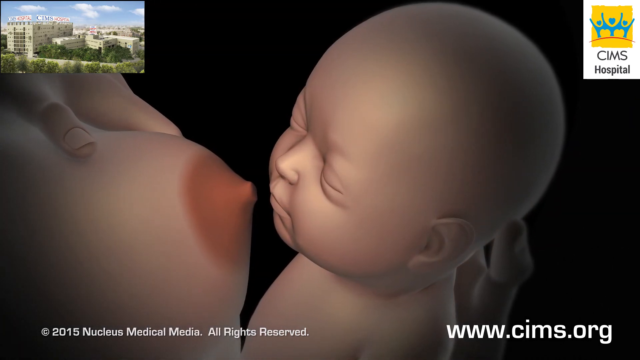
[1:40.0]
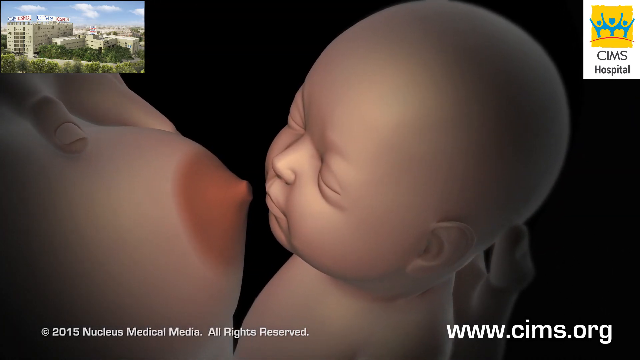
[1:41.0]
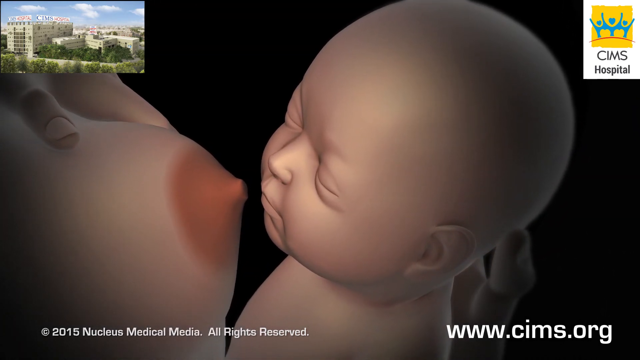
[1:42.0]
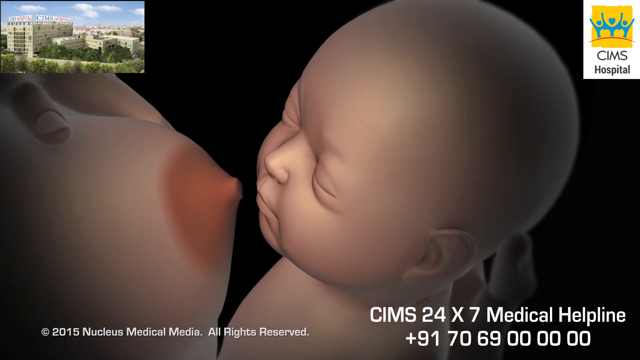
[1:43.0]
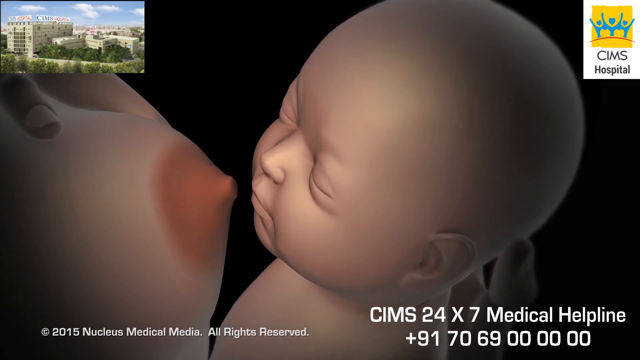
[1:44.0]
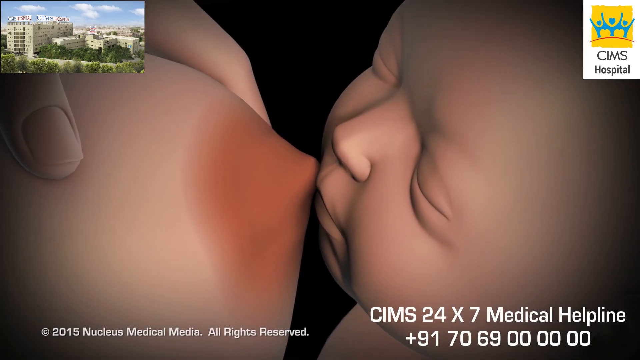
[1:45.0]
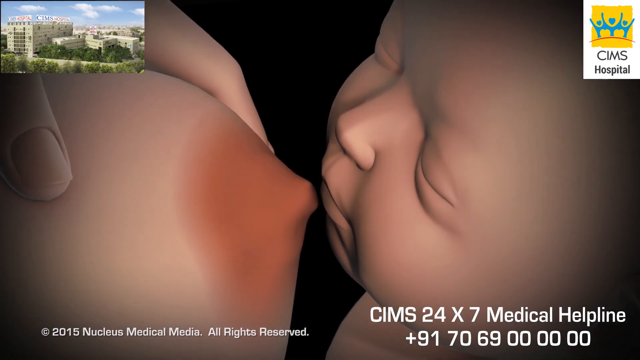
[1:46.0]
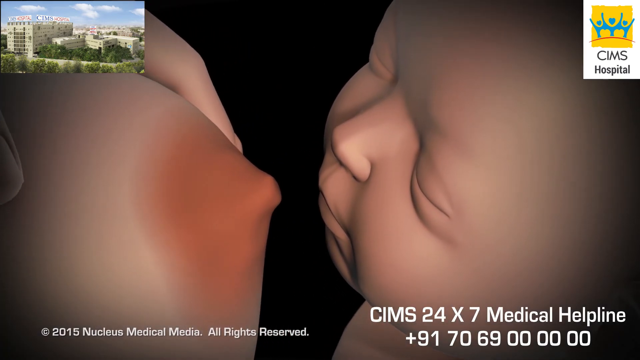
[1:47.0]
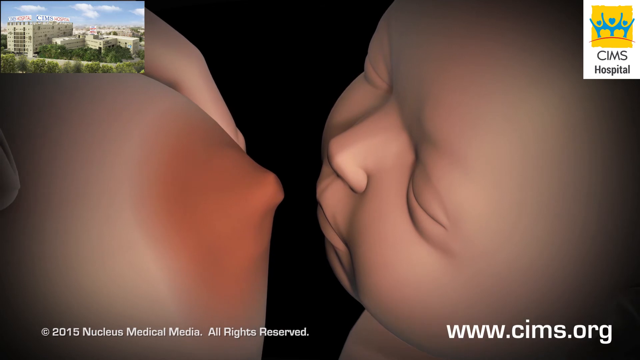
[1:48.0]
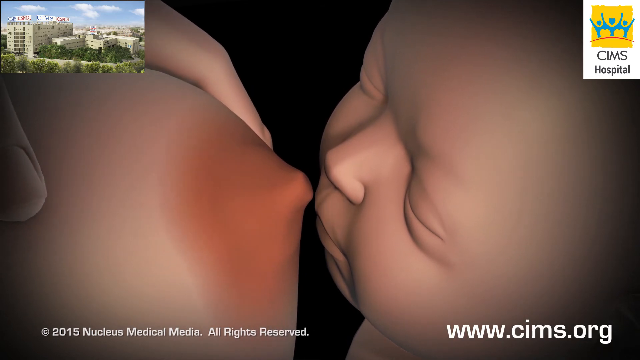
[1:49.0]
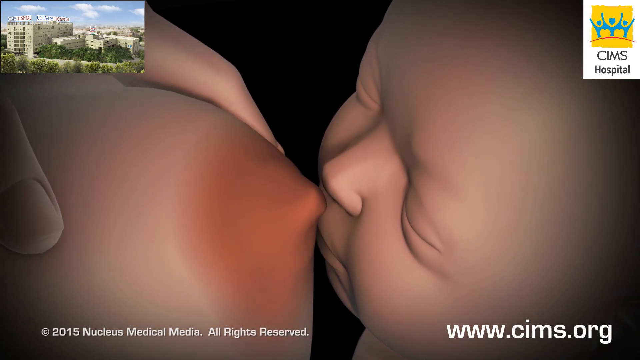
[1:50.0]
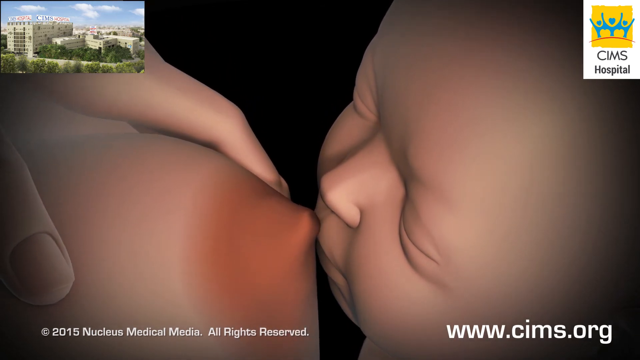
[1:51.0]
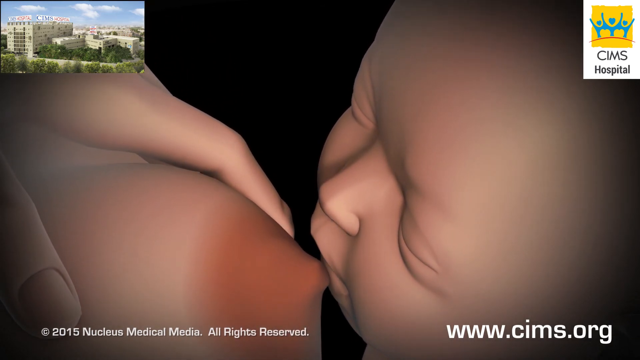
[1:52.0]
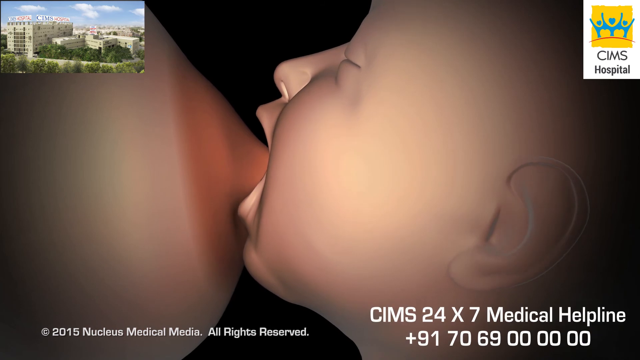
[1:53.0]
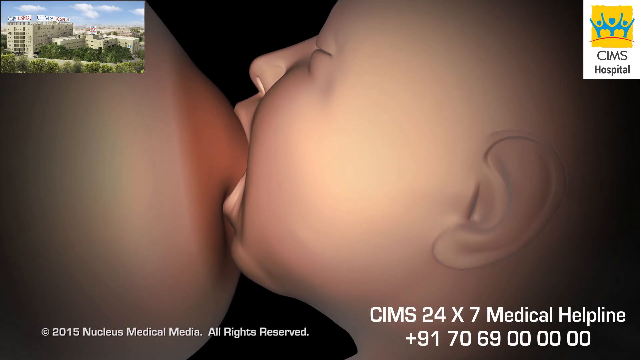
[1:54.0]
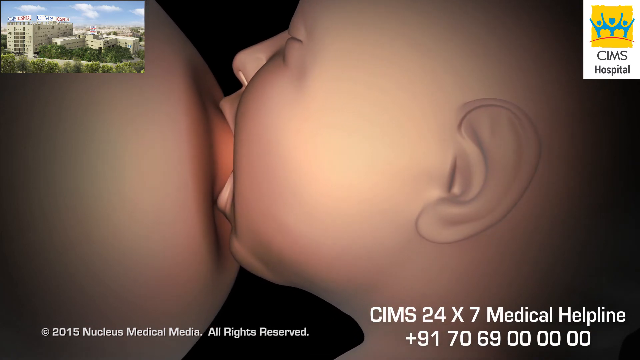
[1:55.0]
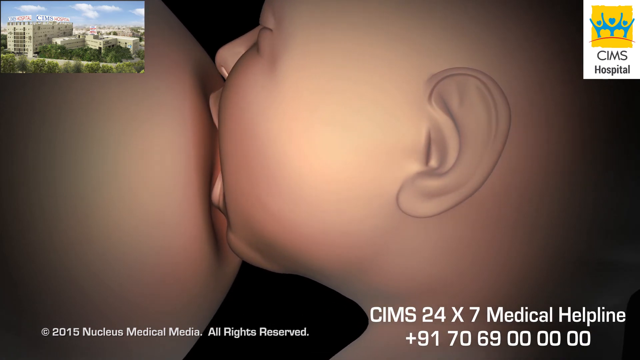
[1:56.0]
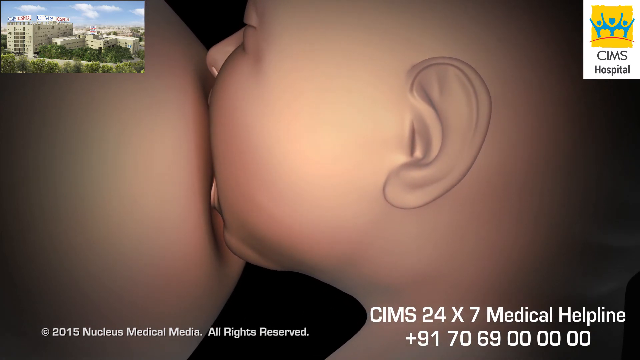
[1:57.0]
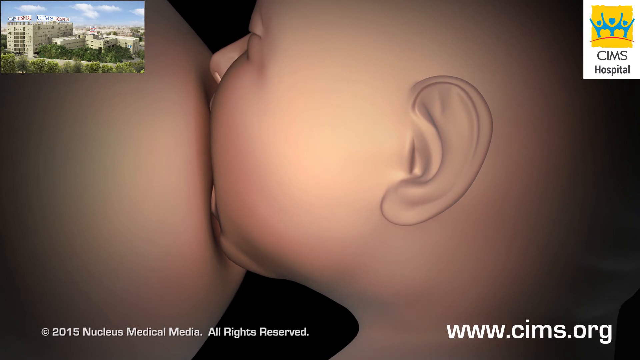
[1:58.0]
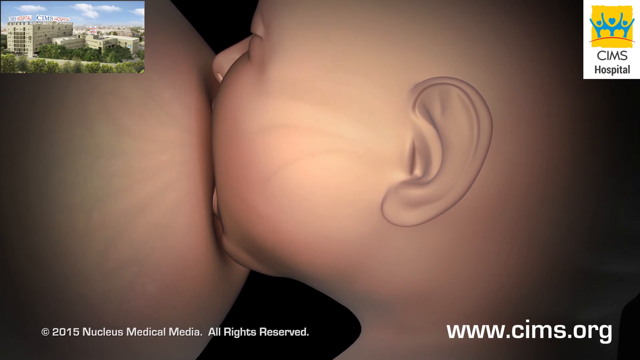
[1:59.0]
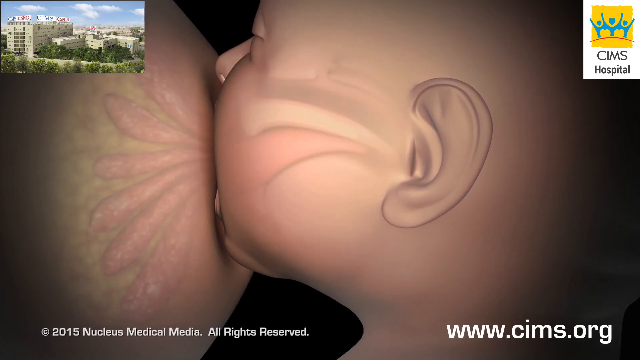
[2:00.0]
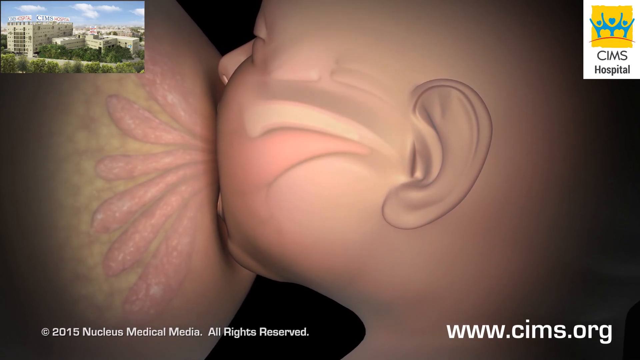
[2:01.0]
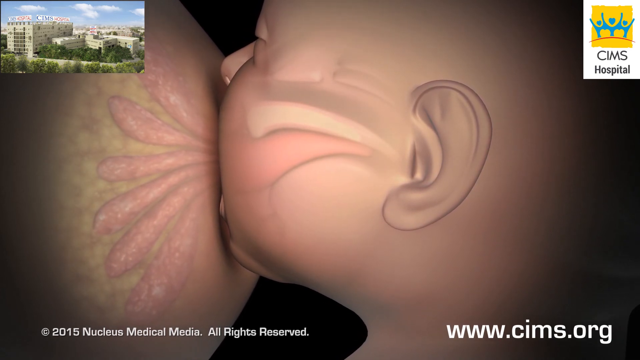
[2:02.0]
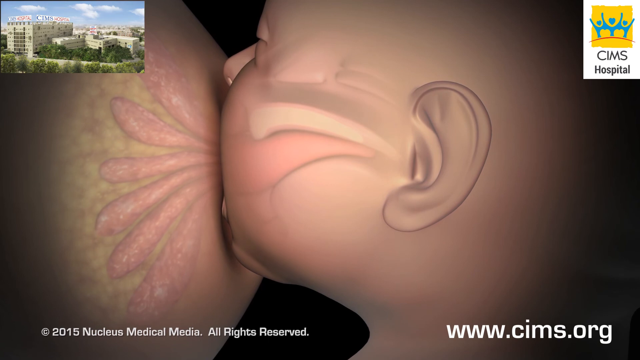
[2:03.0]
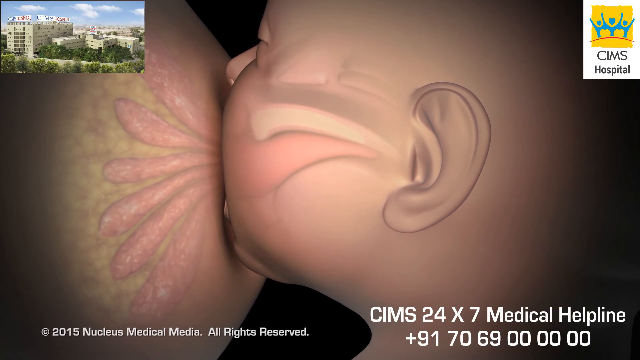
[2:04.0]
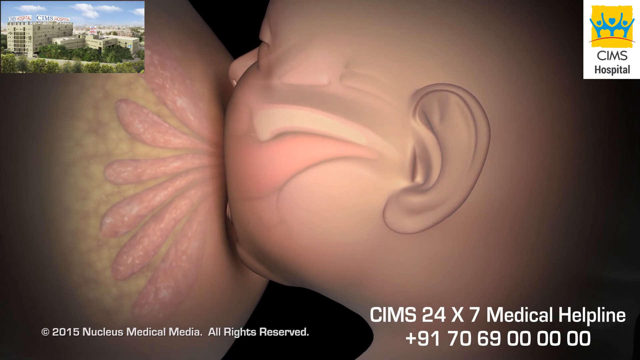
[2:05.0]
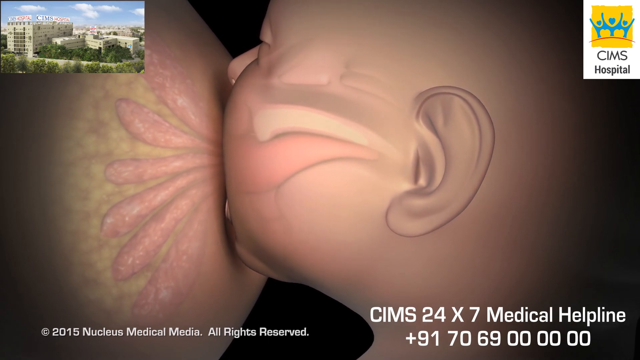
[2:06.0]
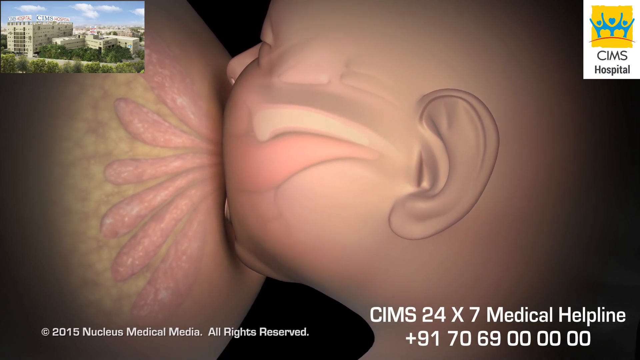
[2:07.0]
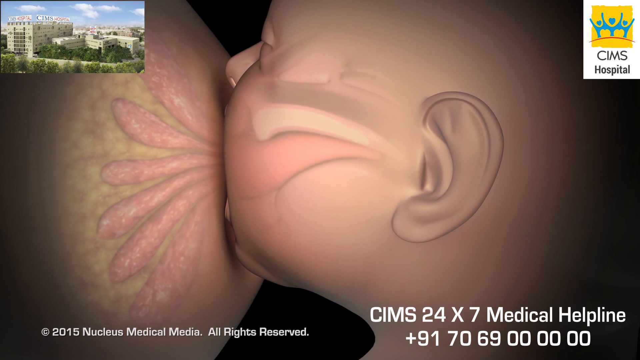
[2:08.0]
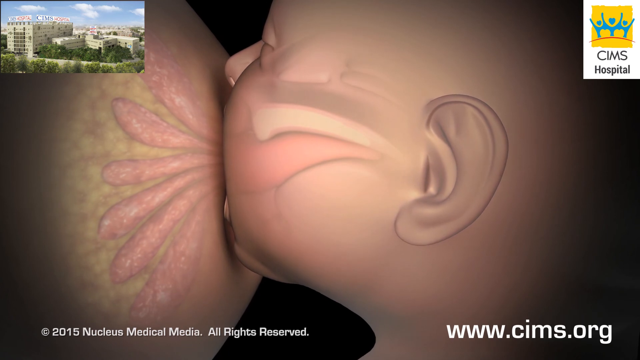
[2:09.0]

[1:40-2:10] The 3D illustration shows the mother holding the baby and bringing it close to the breast. She rubs her nipple on the bridge between the baby's nose and top lip, which makes the baby raise its head, and when the nipple touches the lip, the baby opens its mouth. The mother then positions the baby's mouth over her areola and pulls the baby in close.